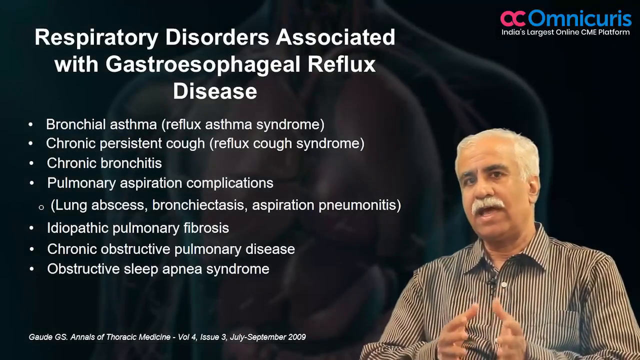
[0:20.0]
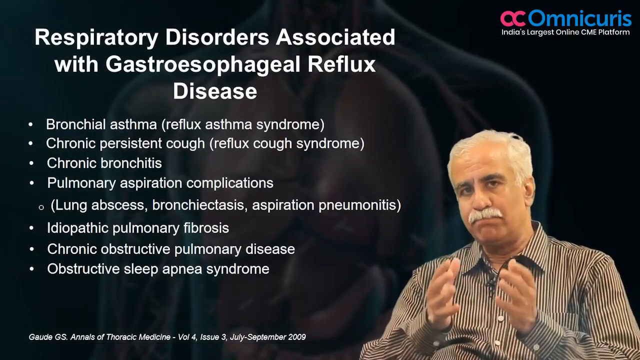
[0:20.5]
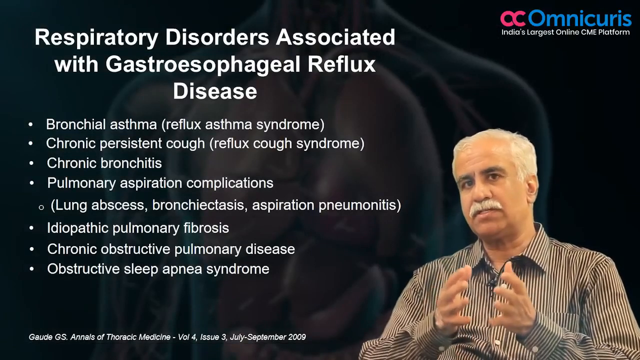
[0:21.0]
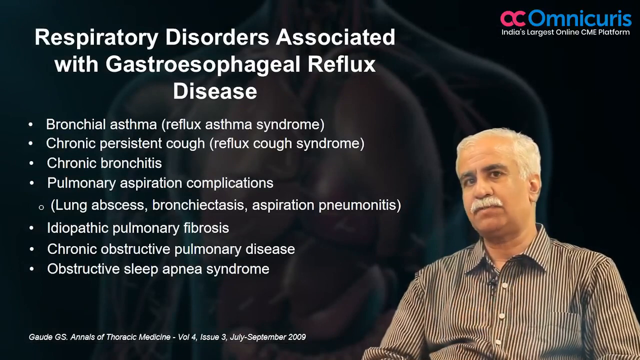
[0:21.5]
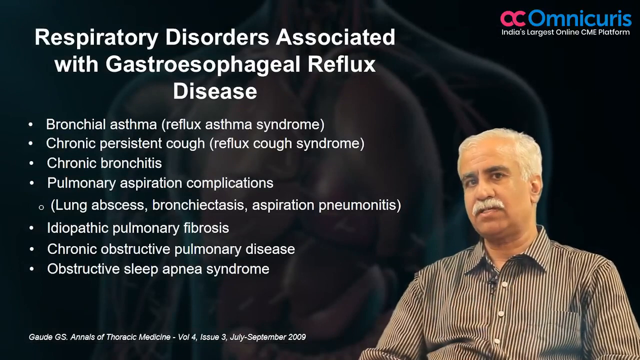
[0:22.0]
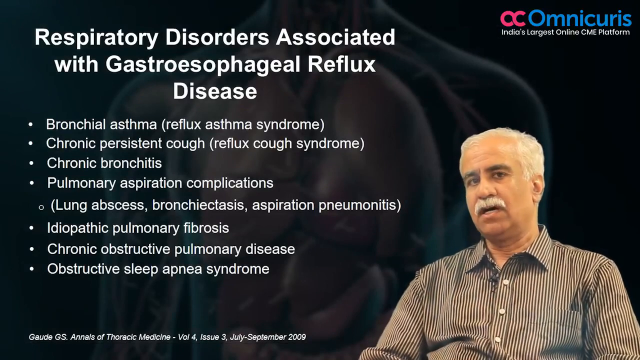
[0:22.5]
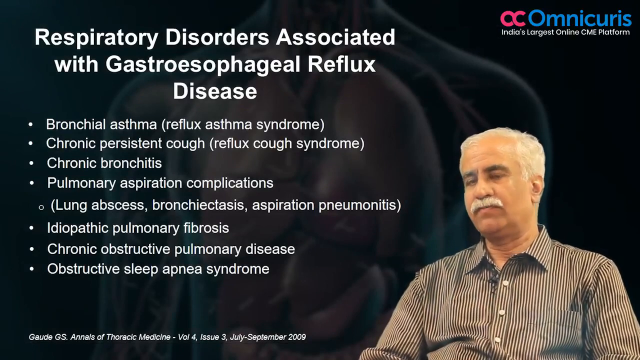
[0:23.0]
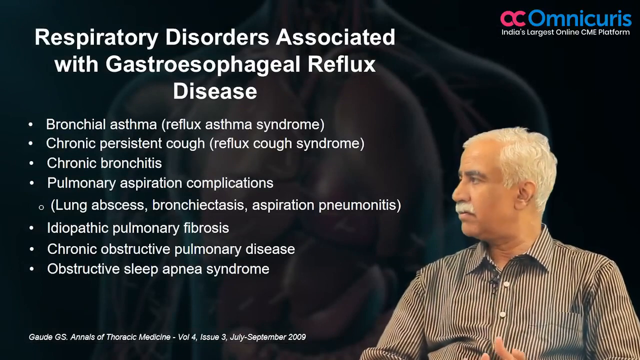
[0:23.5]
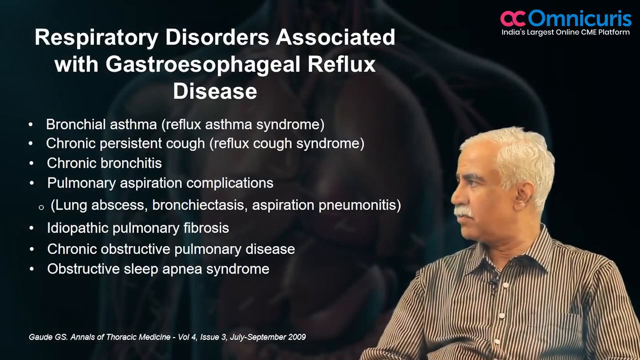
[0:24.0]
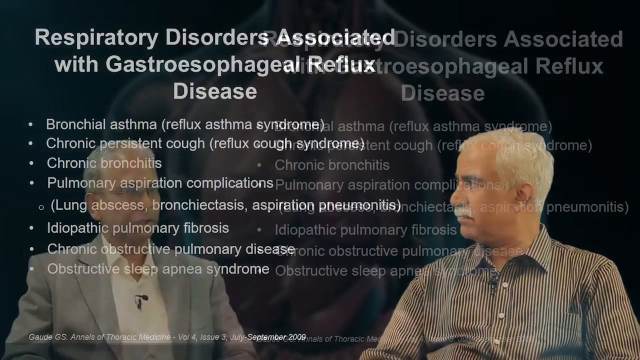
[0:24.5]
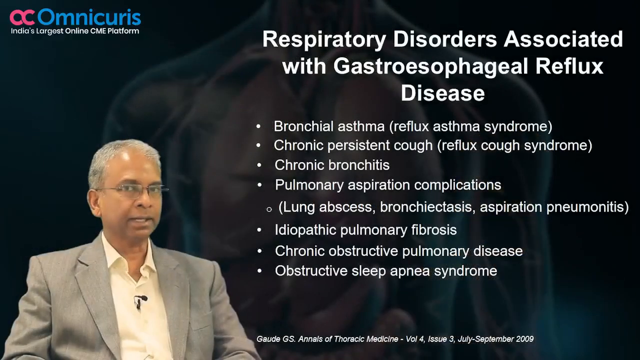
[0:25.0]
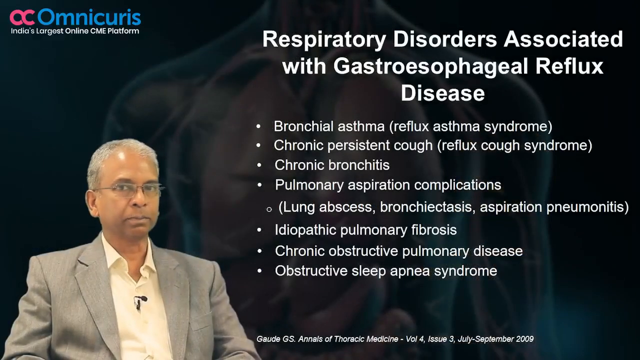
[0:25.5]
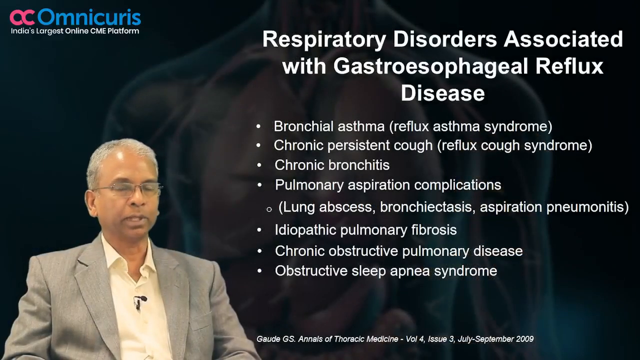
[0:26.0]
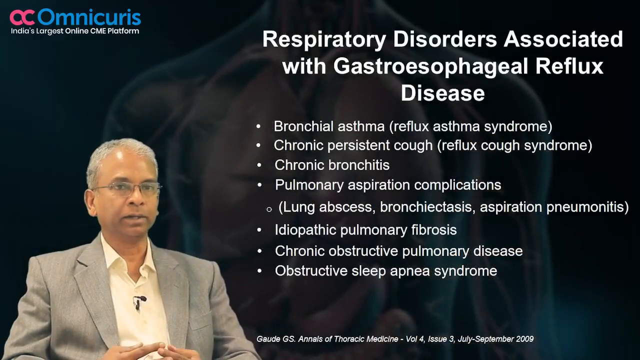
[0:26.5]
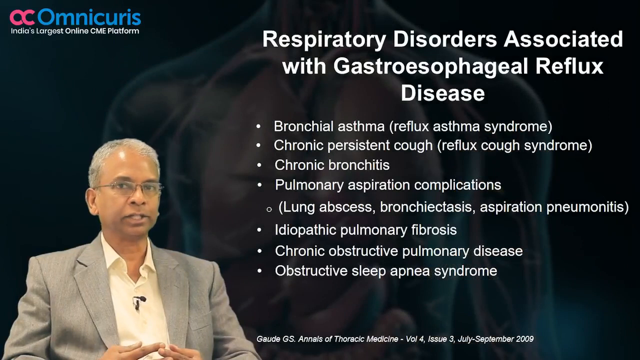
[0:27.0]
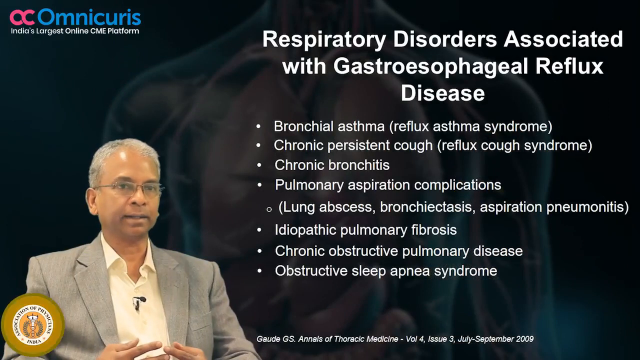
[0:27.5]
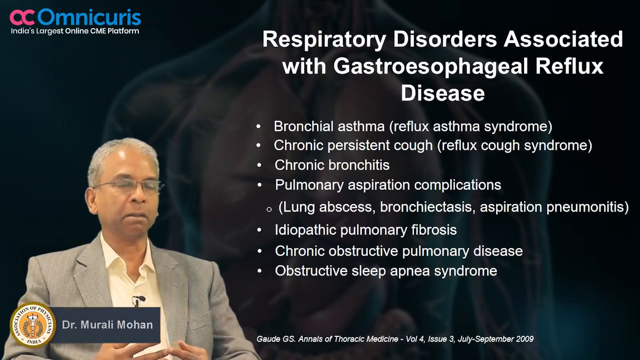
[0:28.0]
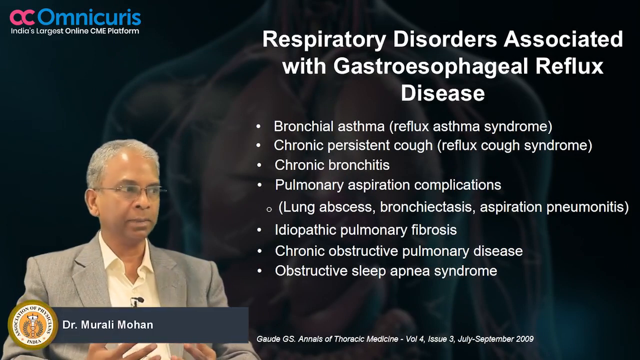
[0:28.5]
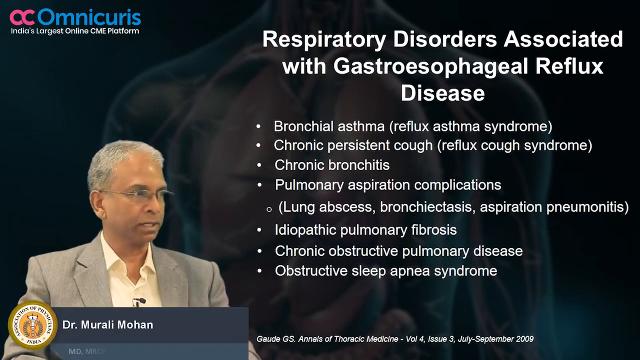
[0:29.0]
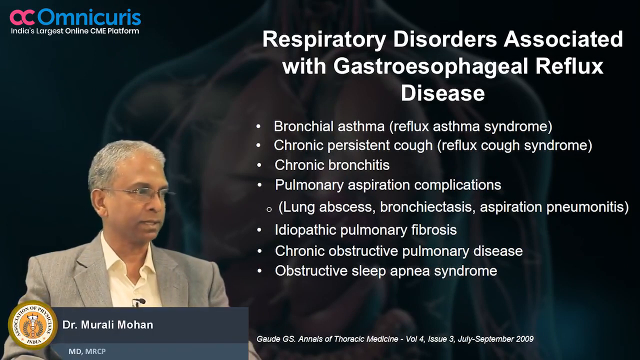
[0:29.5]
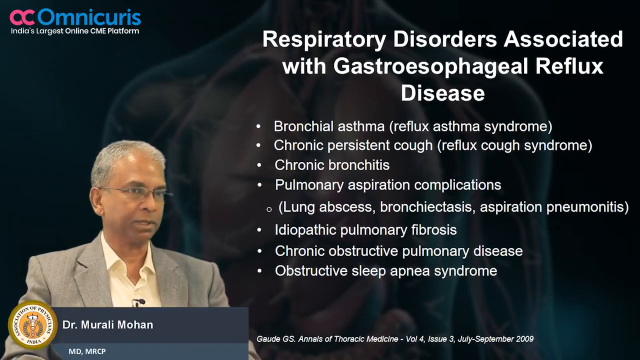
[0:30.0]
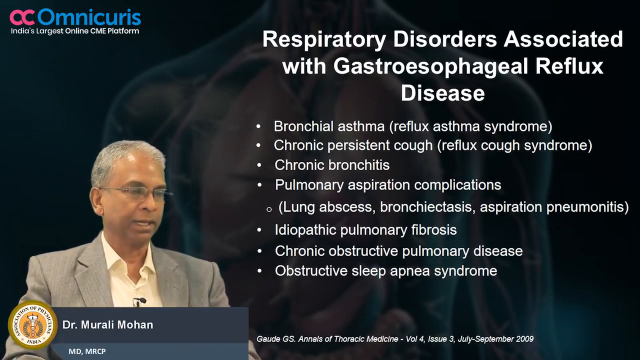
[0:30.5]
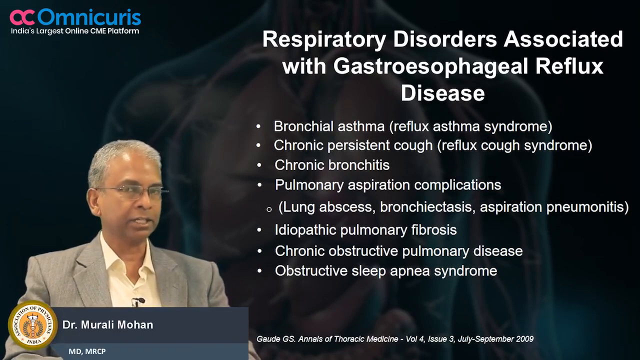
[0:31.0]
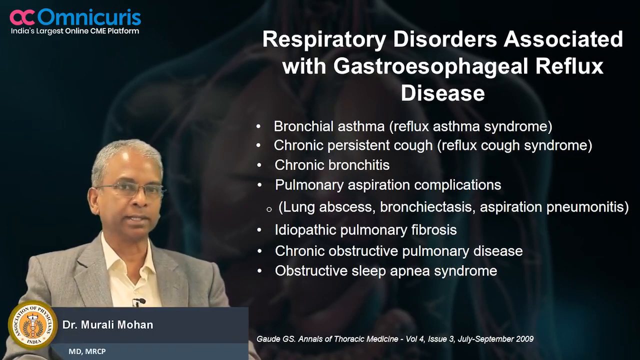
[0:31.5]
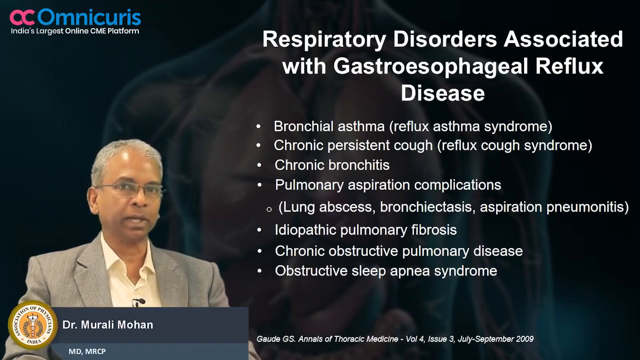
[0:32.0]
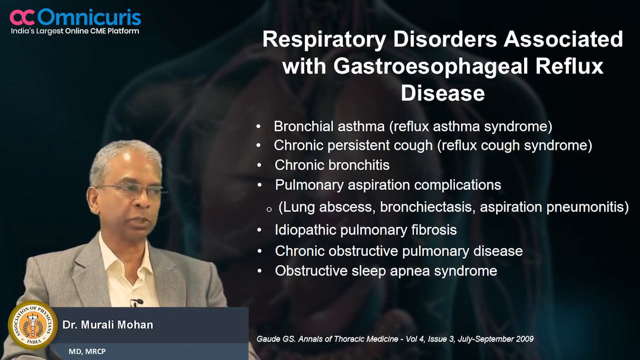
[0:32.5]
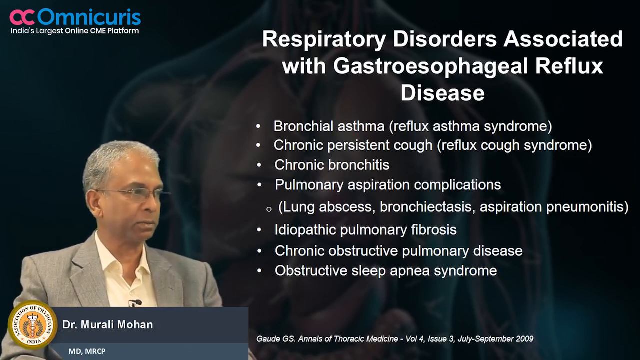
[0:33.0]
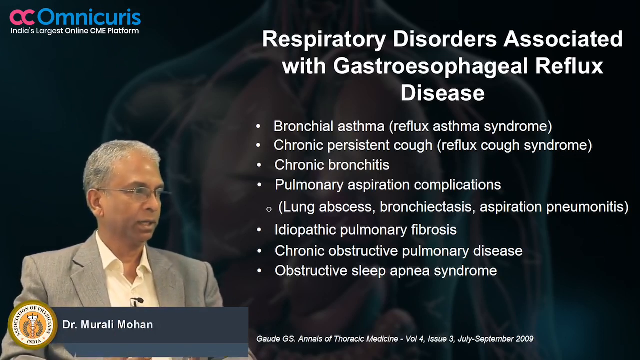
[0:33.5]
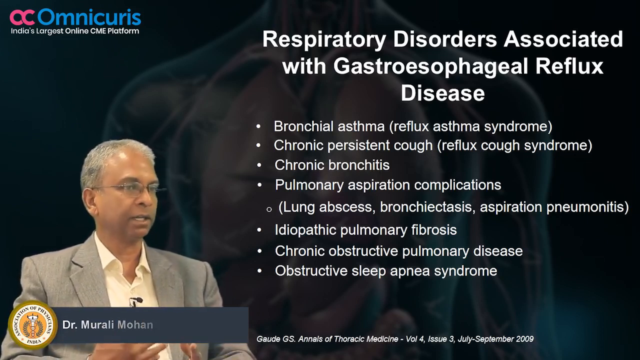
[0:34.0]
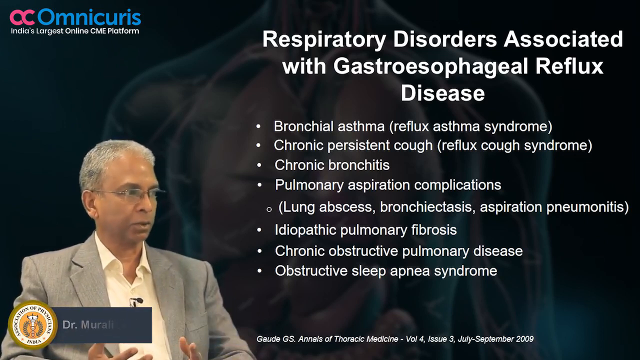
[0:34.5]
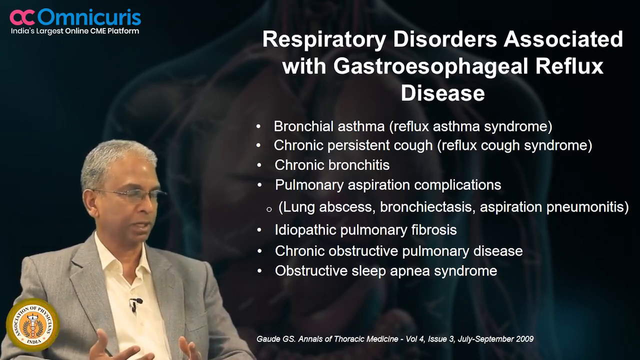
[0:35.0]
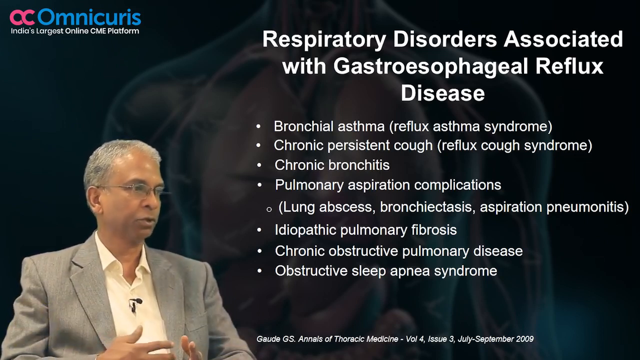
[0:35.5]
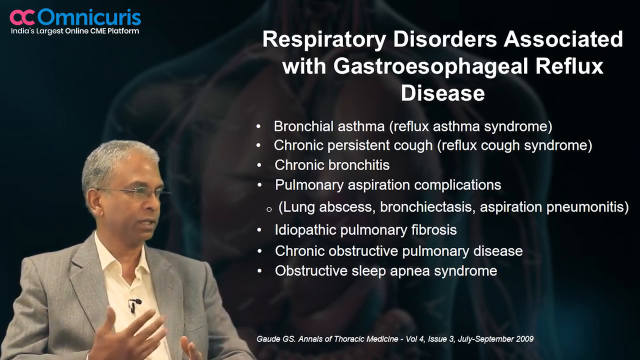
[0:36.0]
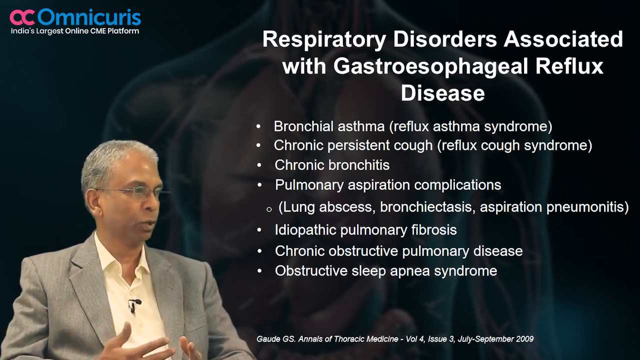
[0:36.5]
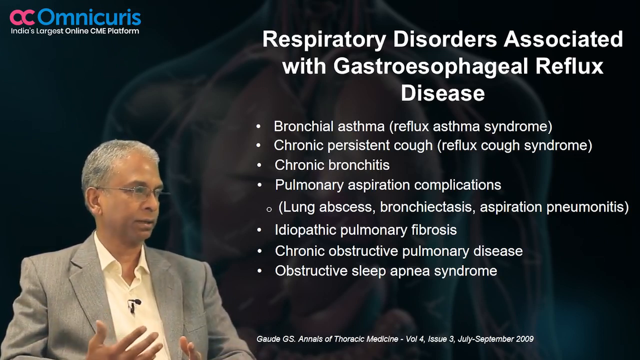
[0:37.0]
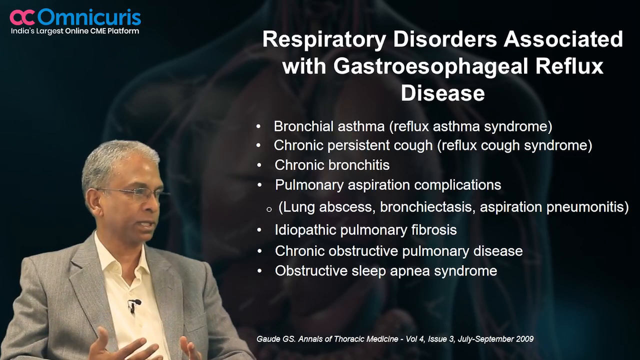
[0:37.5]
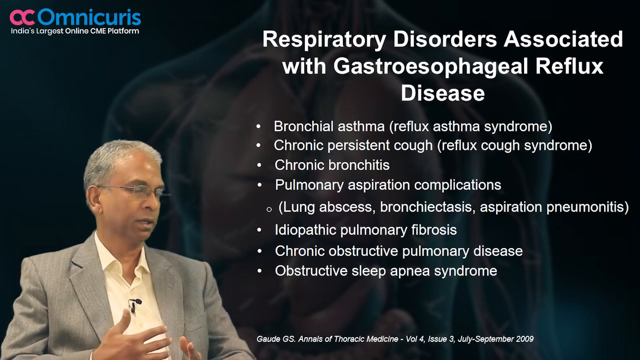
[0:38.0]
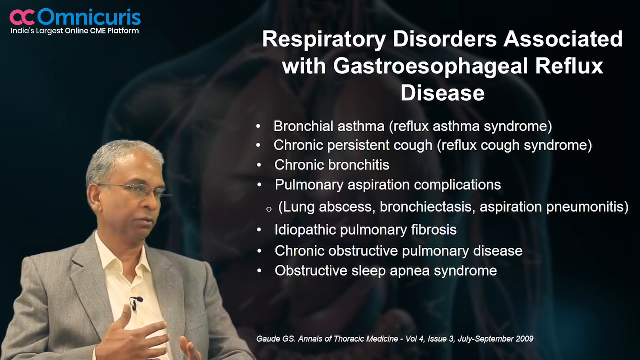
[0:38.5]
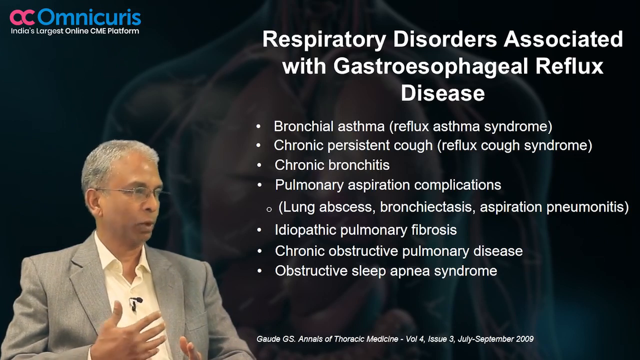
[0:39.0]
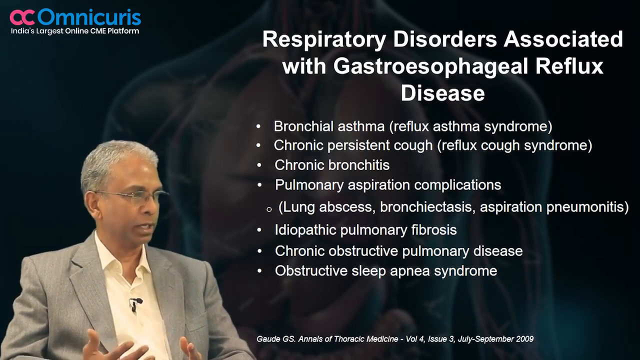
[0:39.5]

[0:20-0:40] The list of respiratory disorders associated with gastroesophageal reflux disease remains on screen: "bronchial asthma, reflux asthma syndrome, chronic persistent cough, reflux cough syndrome, chronic bronchitis, pulmonary aspiration complications, lung abscess, bronchial stasis, aspiration pneumotitis, idiopathic pulmonary fibrosis, chronic obstructive pulmonary disease, obstructive sleep apnea syndrome". The "OC Omnicurus, India's largest online CME platform" logo is in the upper right-hand corner, and a person, apparently a doctor, speaks about the topic. Then another doctor appears on screen alongside the same text and talks about it, with the OC Omnicurus logo now in the upper left-hand part of the screen. He continues talking with all of the text on screen.